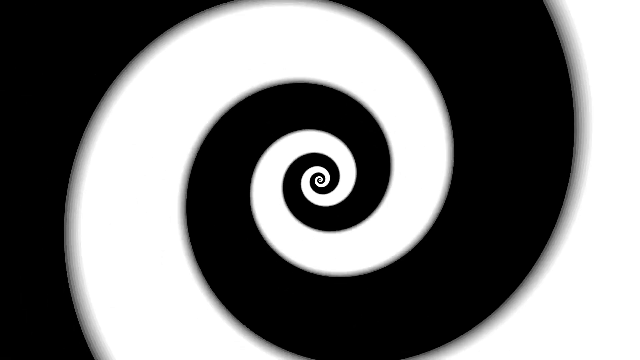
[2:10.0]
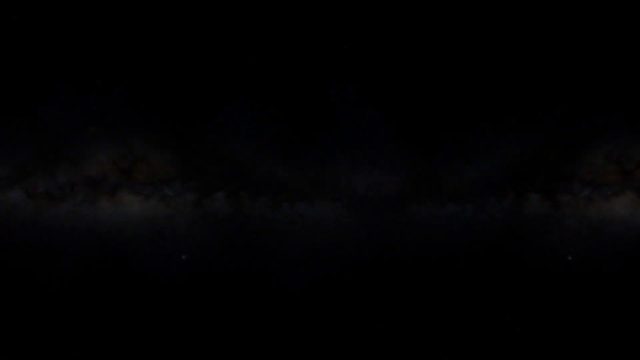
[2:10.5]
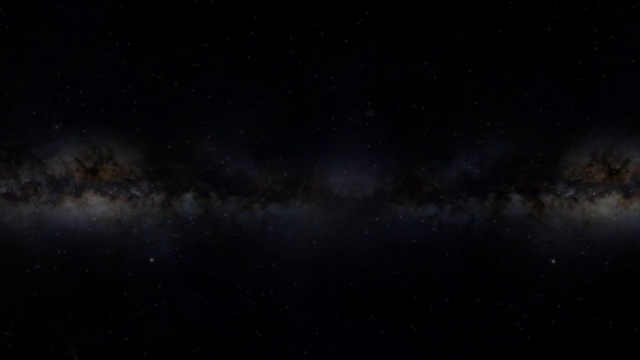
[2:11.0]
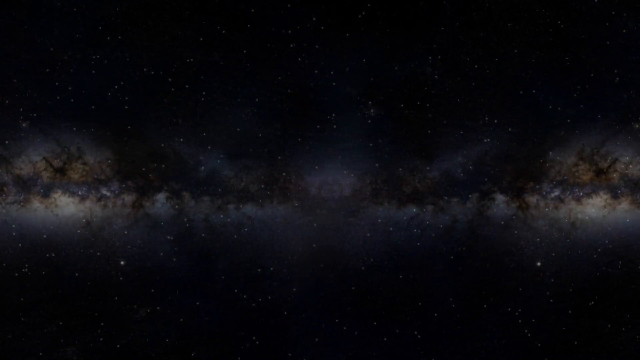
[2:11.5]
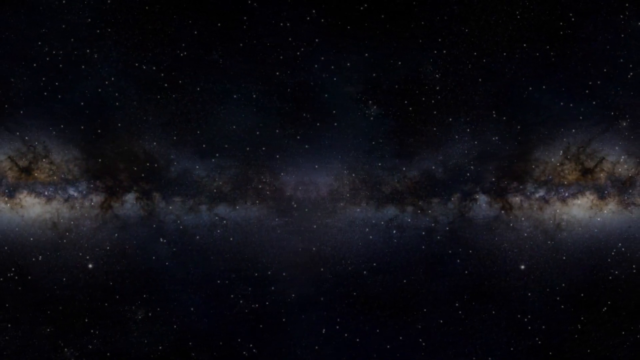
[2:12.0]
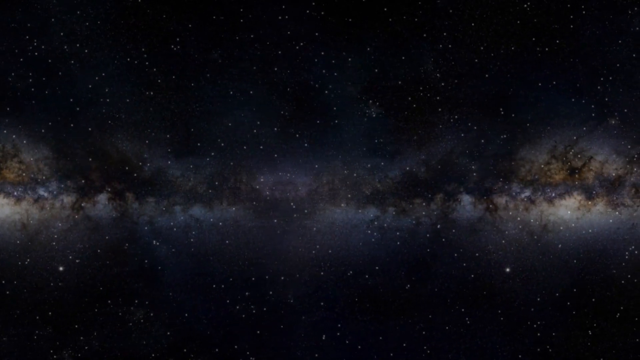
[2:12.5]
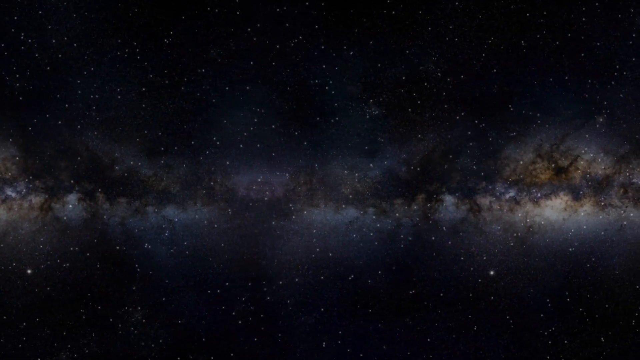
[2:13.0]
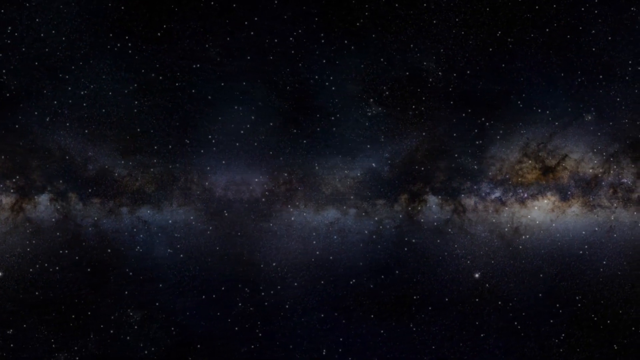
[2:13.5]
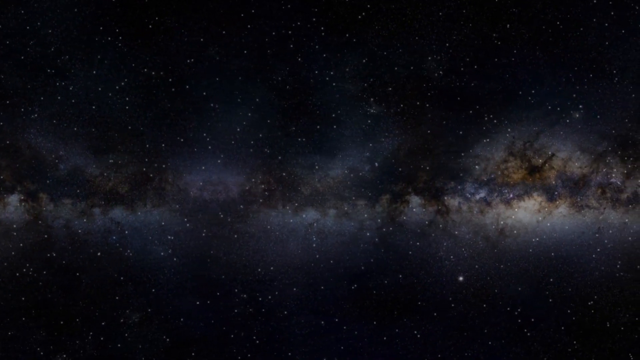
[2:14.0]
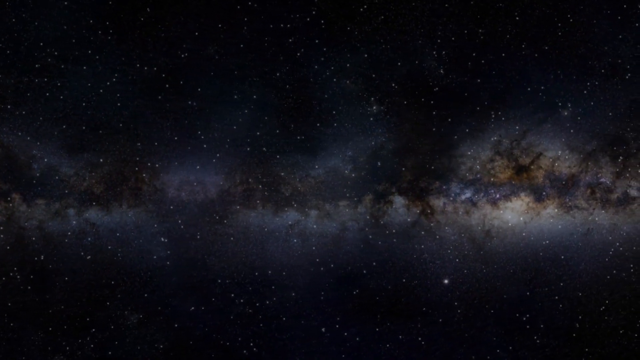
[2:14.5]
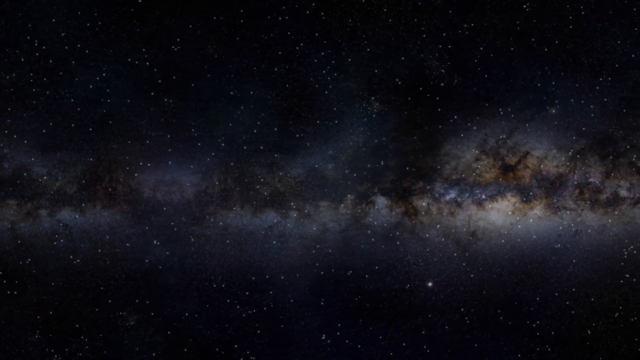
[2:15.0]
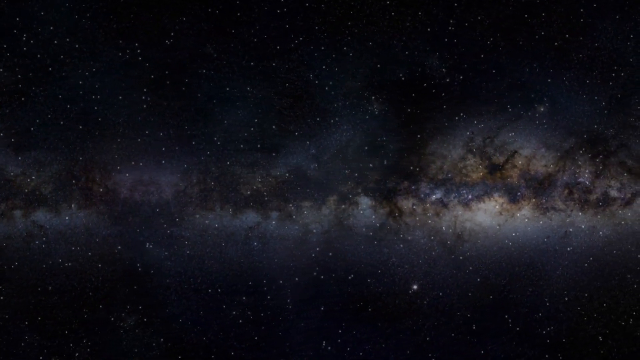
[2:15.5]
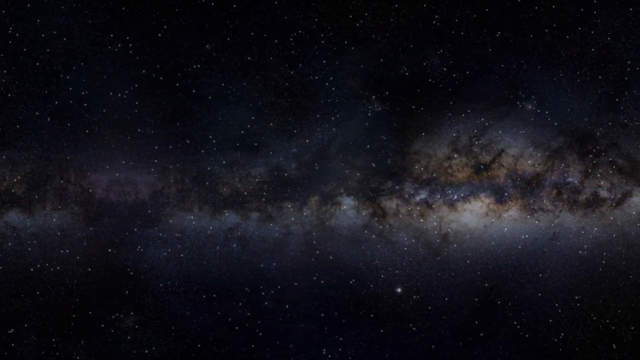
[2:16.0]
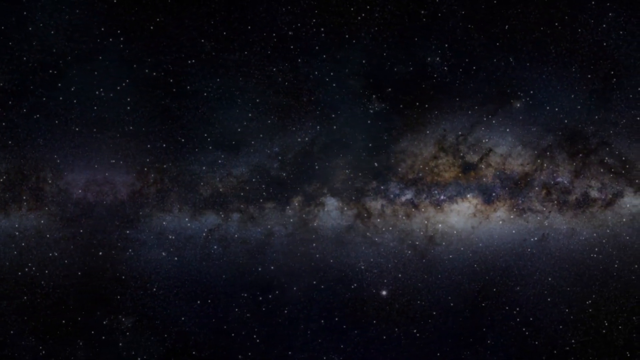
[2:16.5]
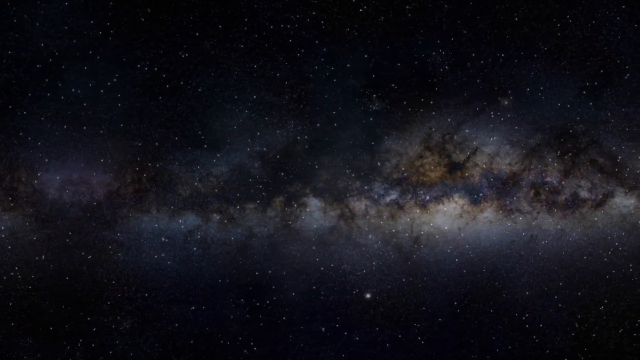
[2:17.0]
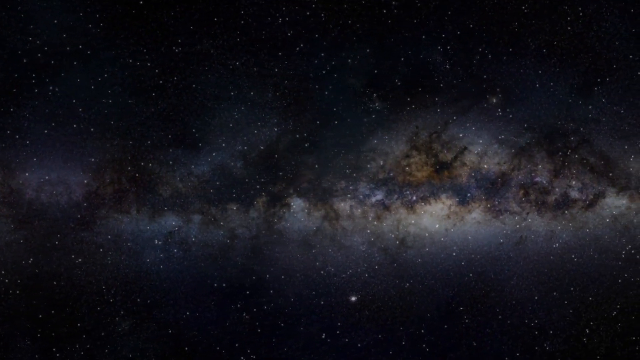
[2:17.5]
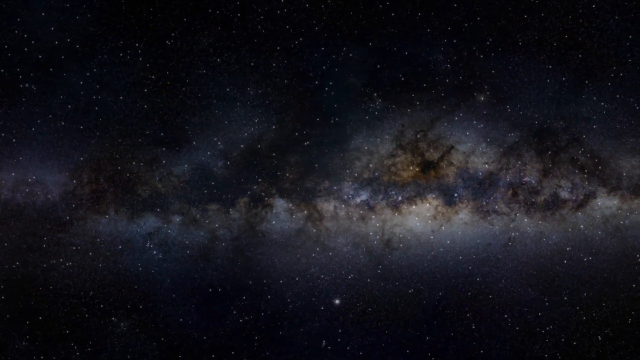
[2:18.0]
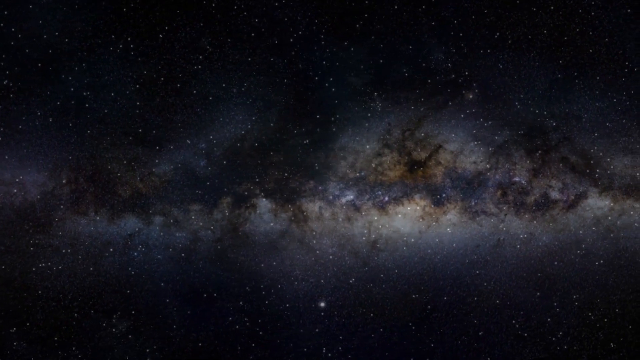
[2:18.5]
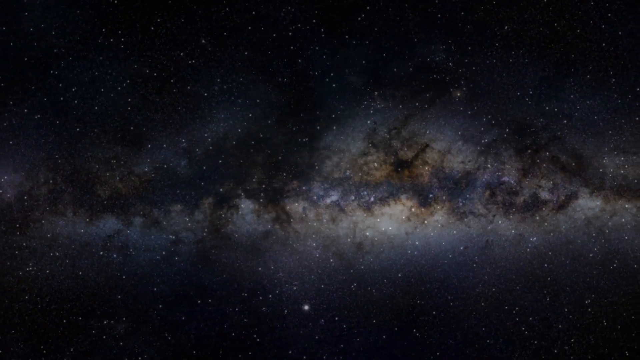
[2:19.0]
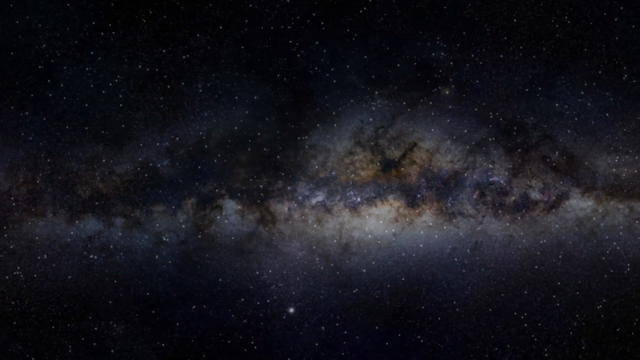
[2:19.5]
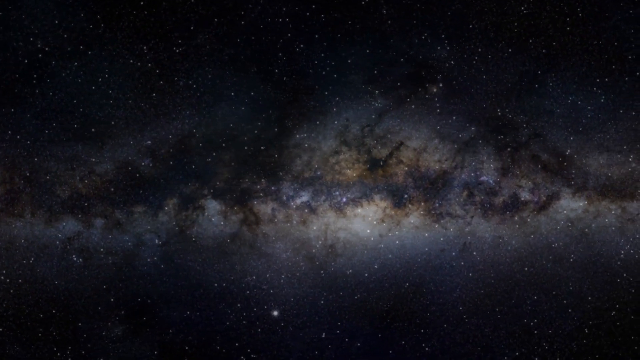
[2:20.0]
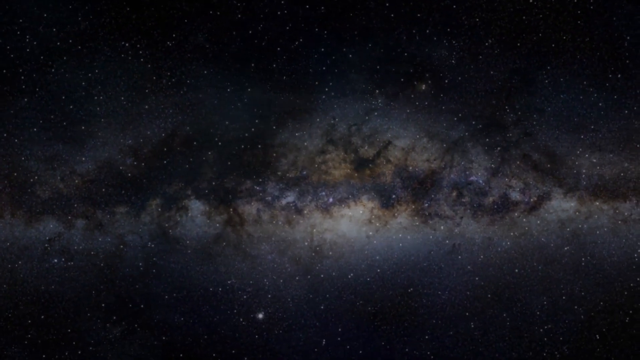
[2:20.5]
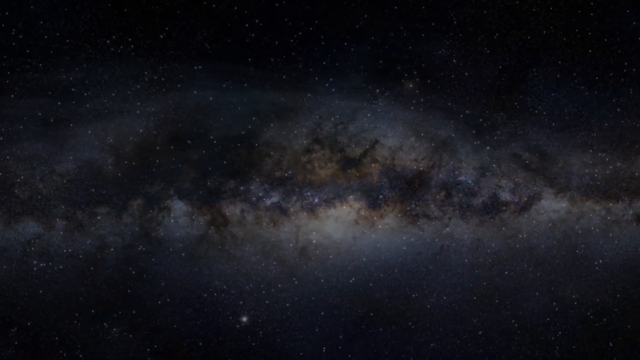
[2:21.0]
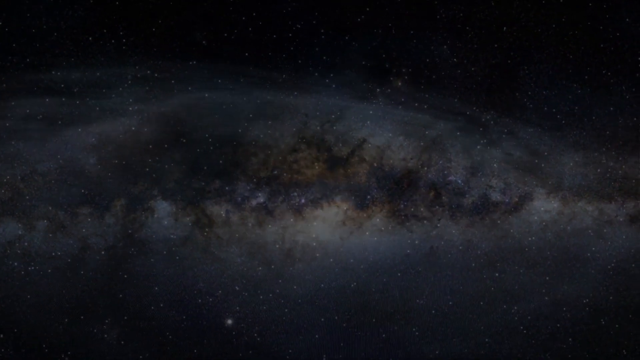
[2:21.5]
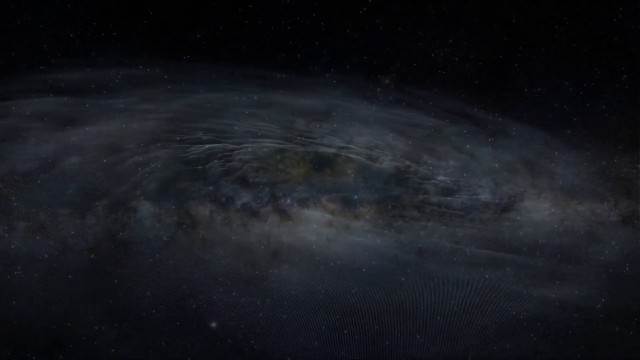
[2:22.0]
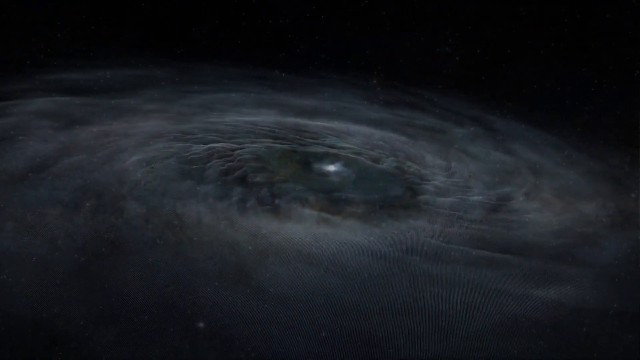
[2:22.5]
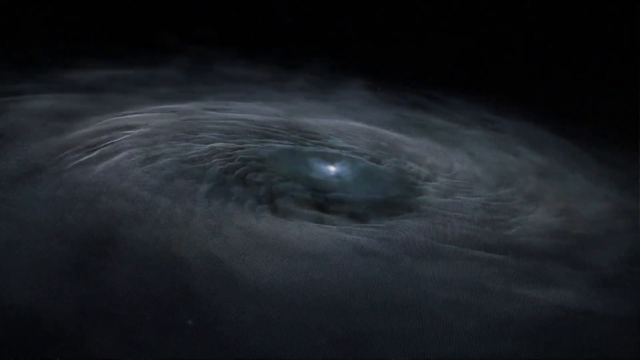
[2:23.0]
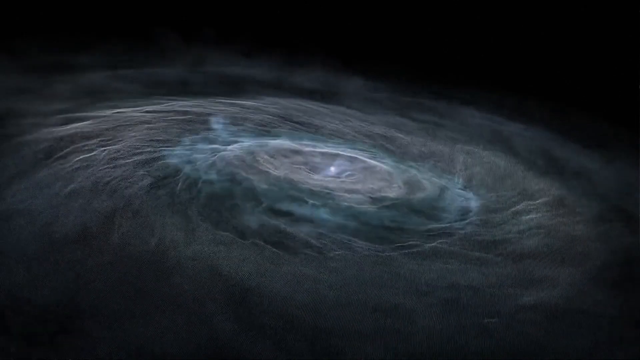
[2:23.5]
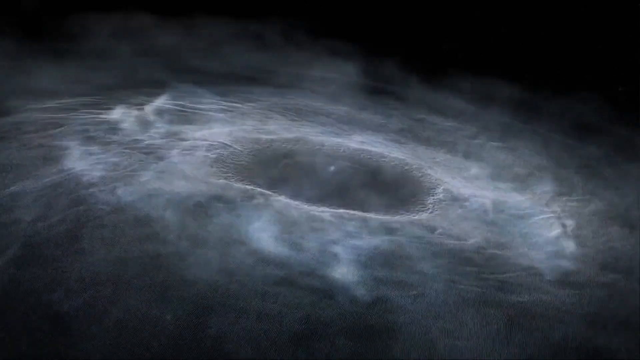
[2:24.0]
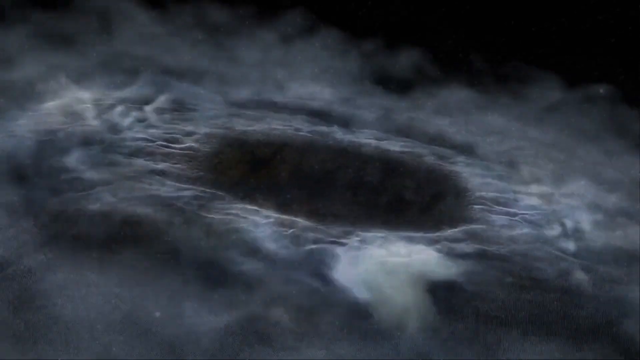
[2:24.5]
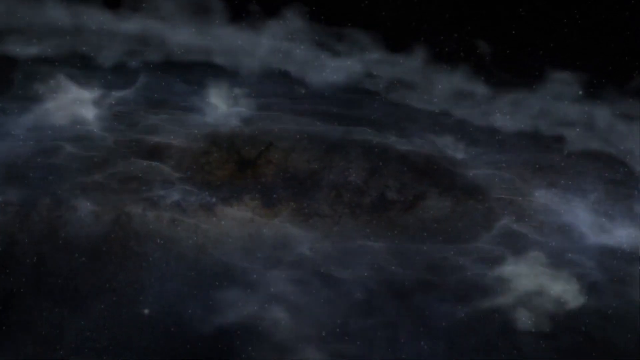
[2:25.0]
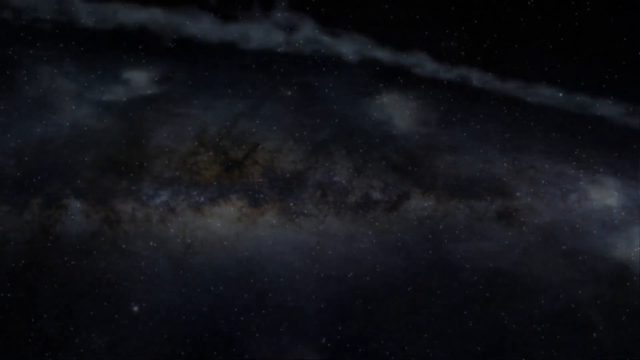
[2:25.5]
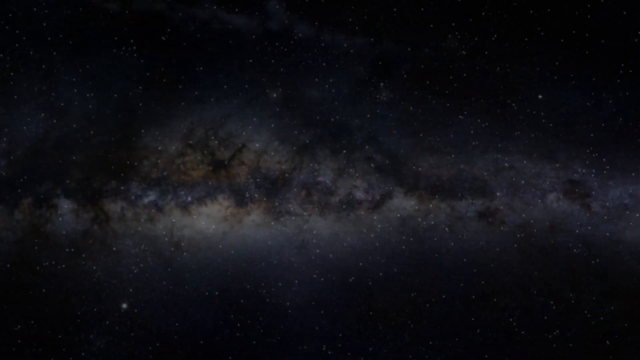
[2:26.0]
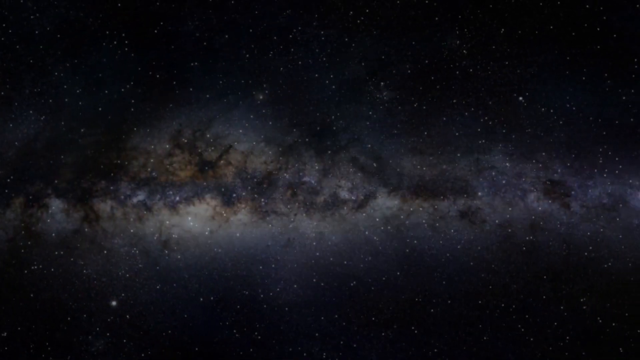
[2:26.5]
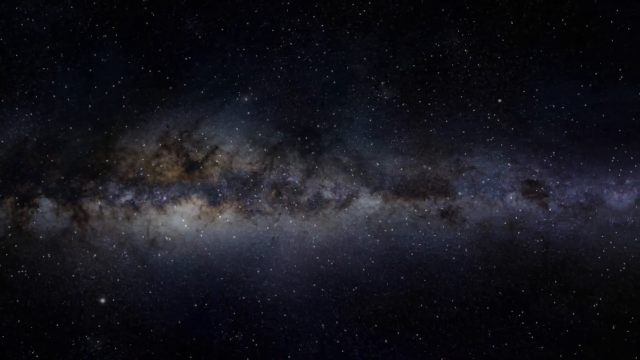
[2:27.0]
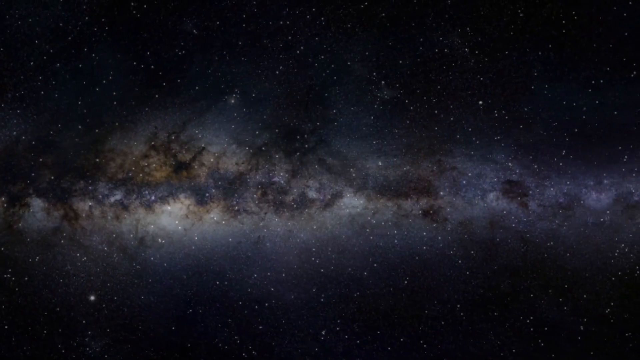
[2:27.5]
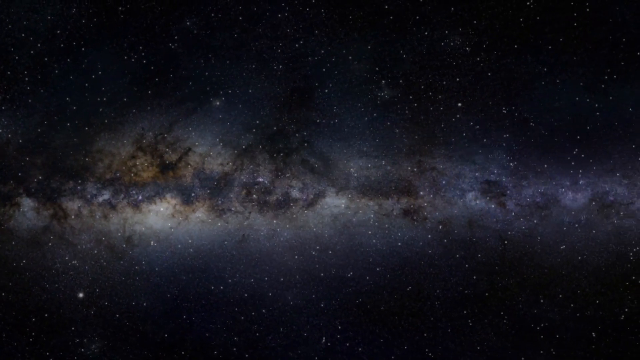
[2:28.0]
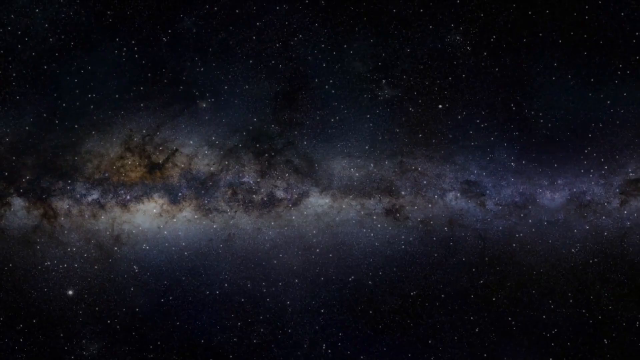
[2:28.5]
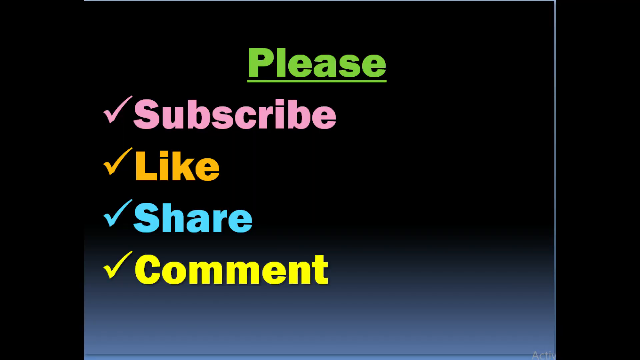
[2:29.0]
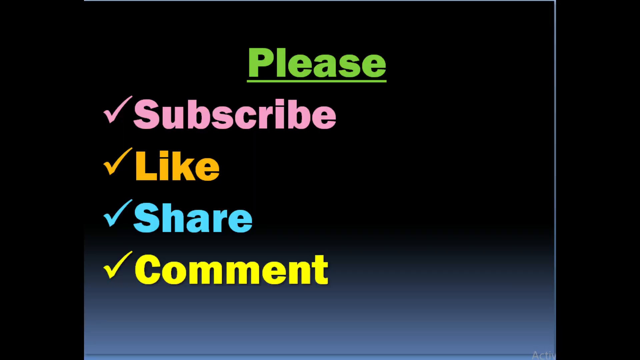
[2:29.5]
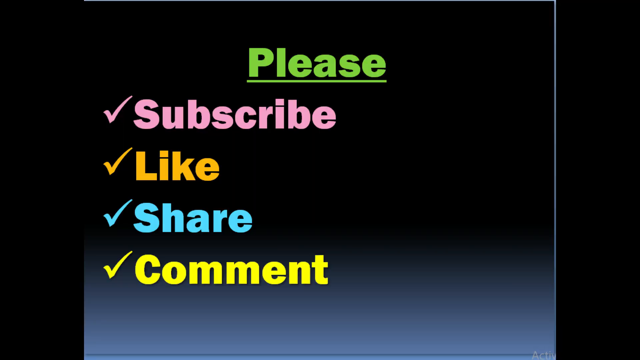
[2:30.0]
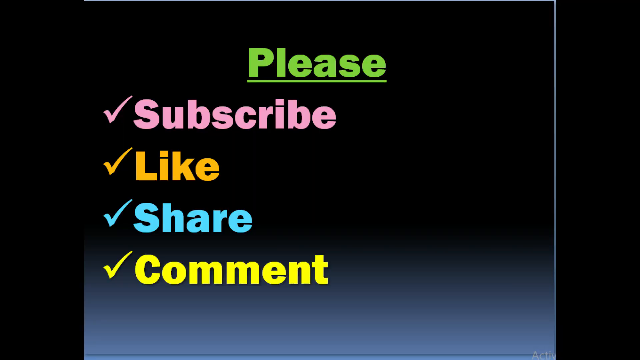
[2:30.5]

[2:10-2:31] The black and white hypnotic movement continues, then the scene changes to another view of the universe or galaxy, with many stars or constellations, like a cluster of stars, moving to the left and stars in the distance. Next there is a bunch of light that kind of looks like a star exploding: a light appears in the middle, a dark hole forms in the middle, and then it disappears. The galaxy appears again with clusters of stars moving to the left. The scene then changes to the final page, which says "please subscribe like share comment." The word "please" is at the top center in green, "subscribe" is pink, "like" is yellow, "share" is turquoise and "comment" is yellow. The background is black, with the bottom part gray.